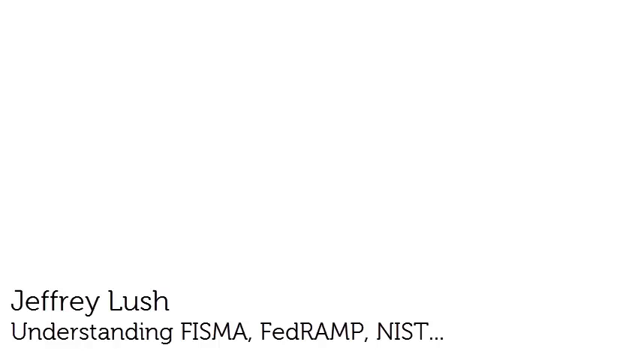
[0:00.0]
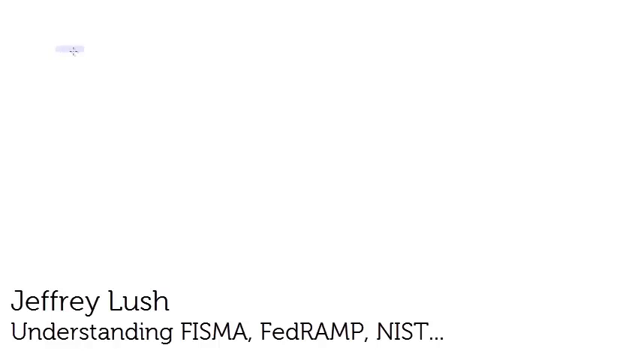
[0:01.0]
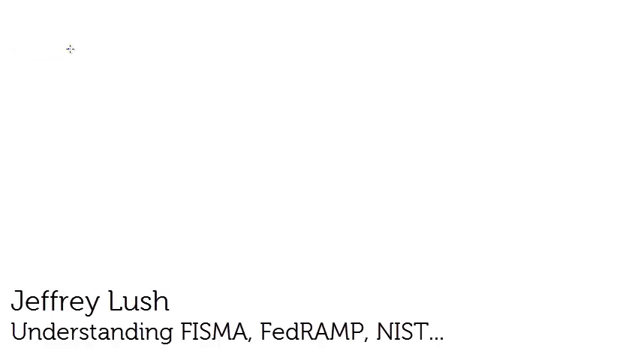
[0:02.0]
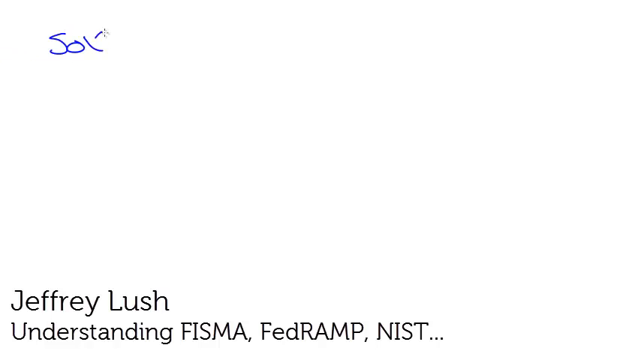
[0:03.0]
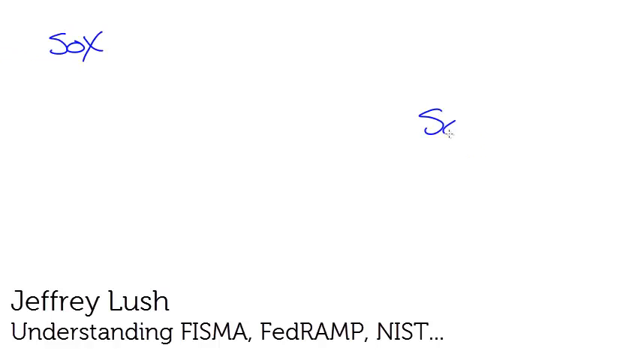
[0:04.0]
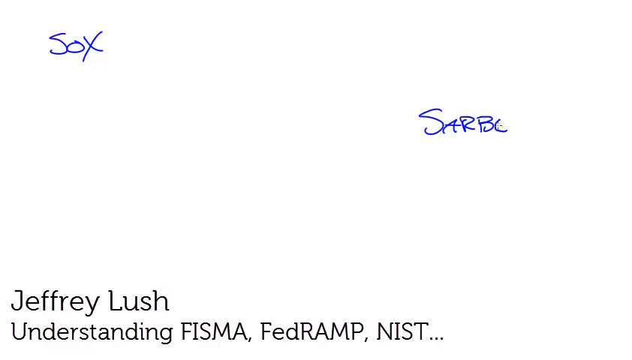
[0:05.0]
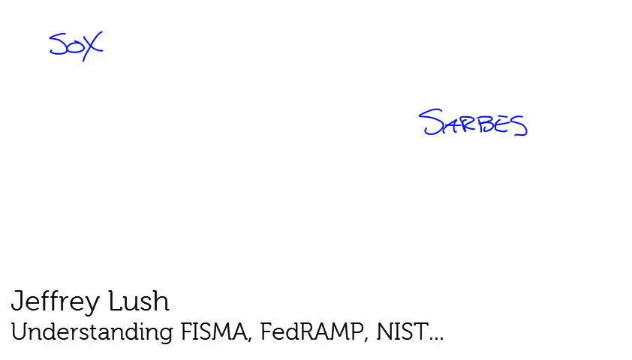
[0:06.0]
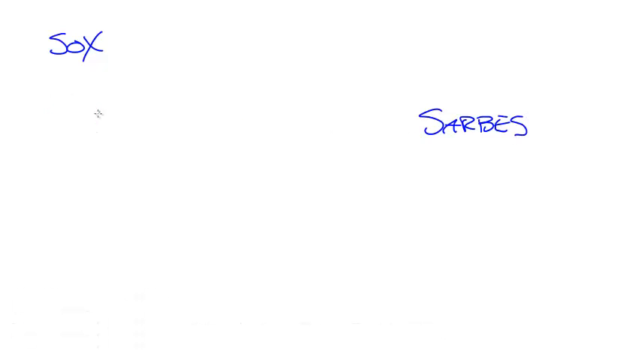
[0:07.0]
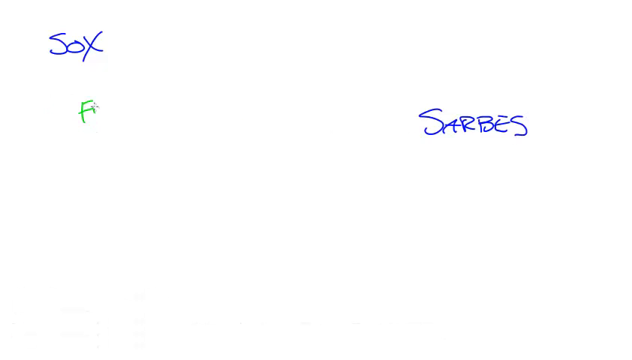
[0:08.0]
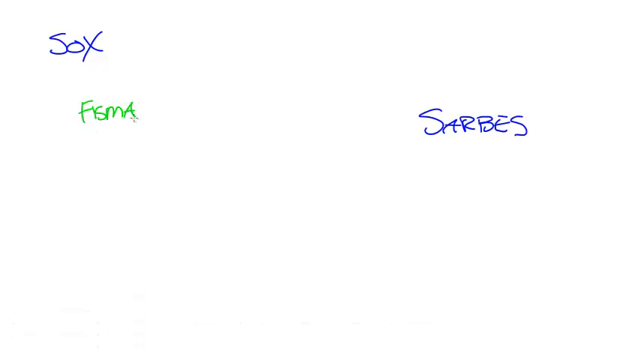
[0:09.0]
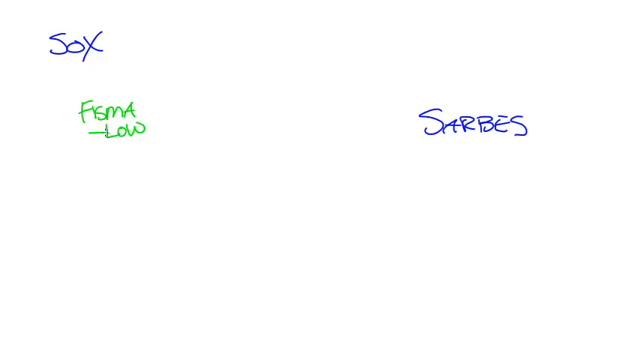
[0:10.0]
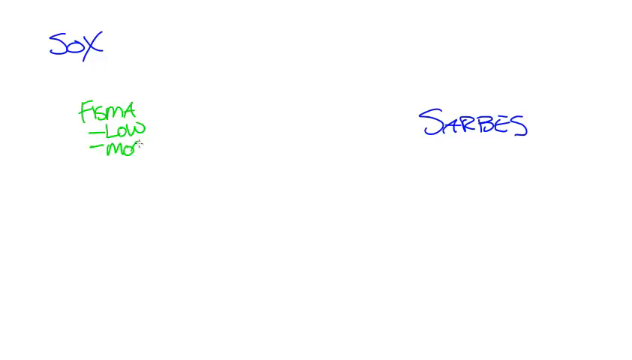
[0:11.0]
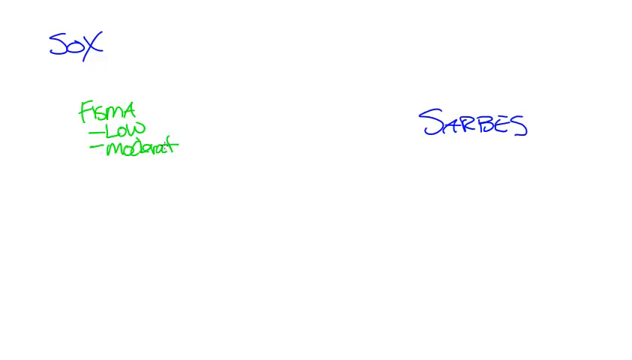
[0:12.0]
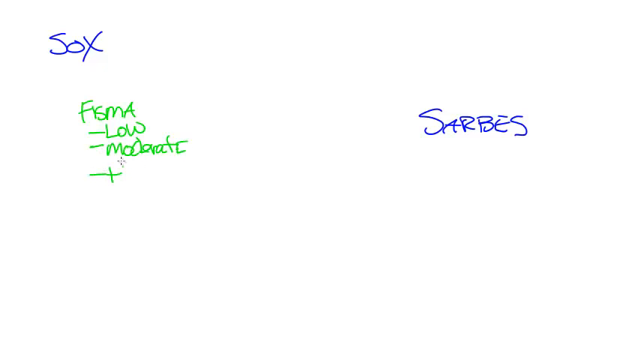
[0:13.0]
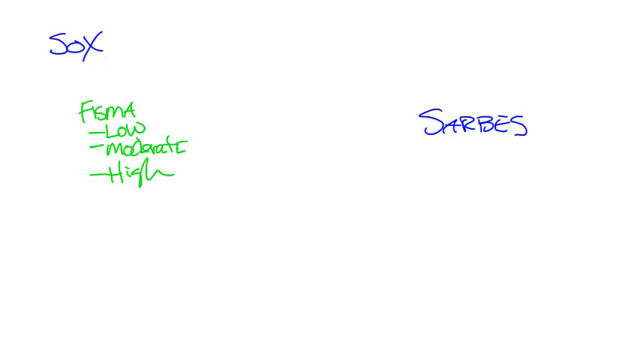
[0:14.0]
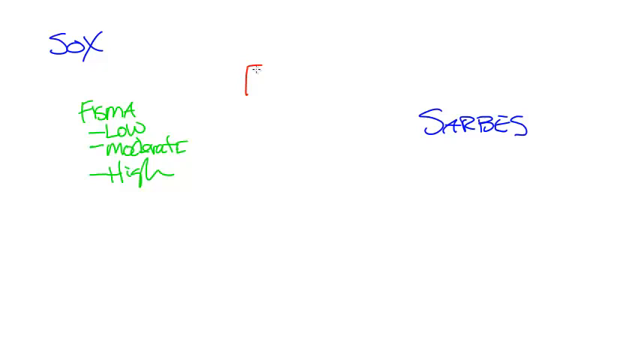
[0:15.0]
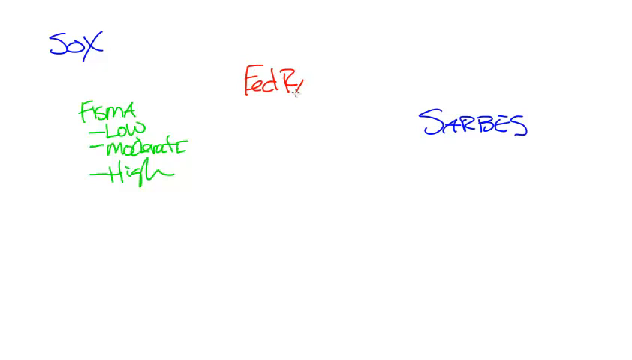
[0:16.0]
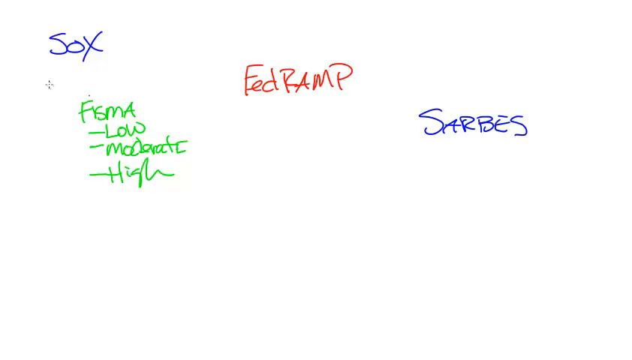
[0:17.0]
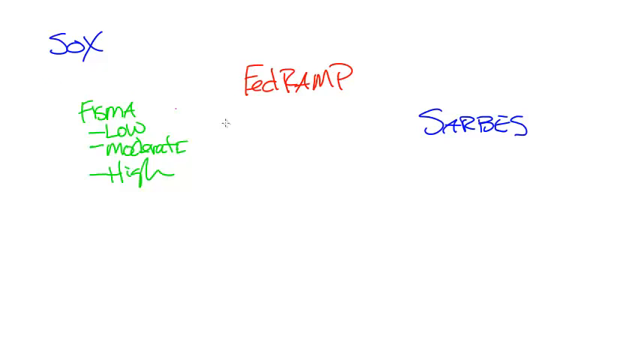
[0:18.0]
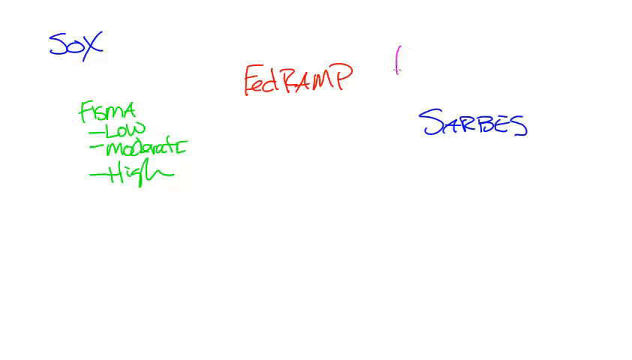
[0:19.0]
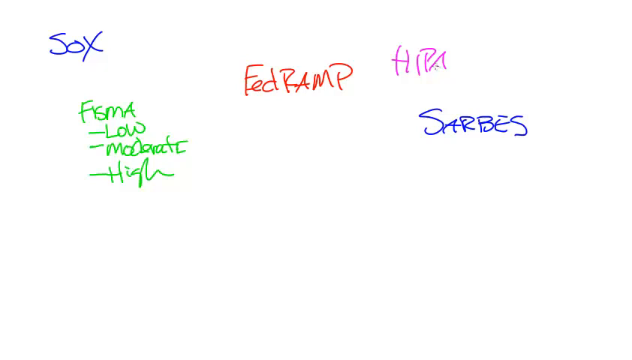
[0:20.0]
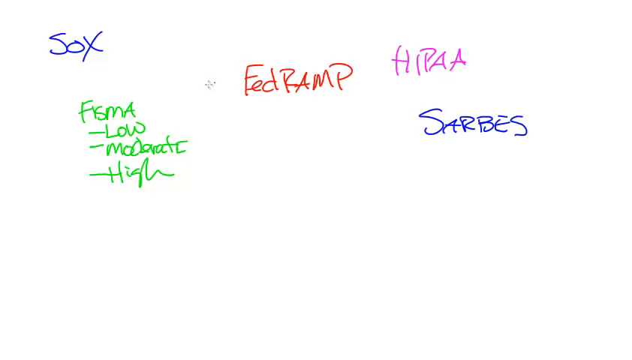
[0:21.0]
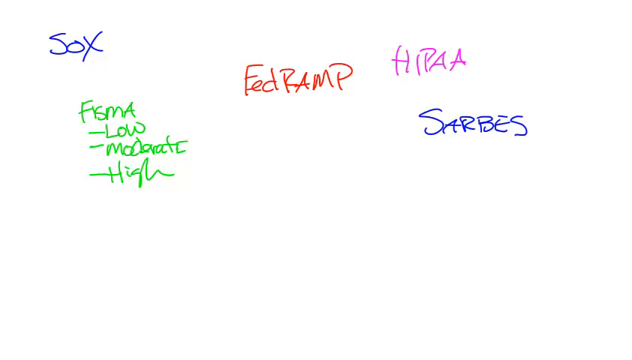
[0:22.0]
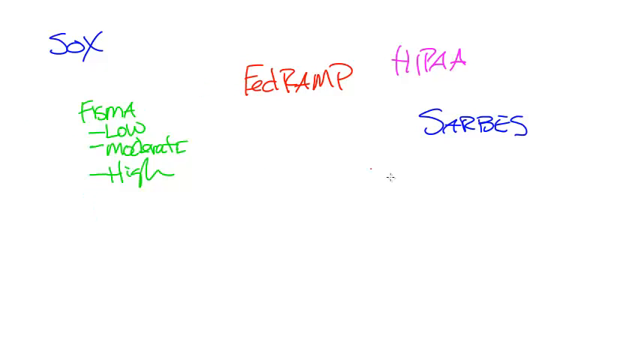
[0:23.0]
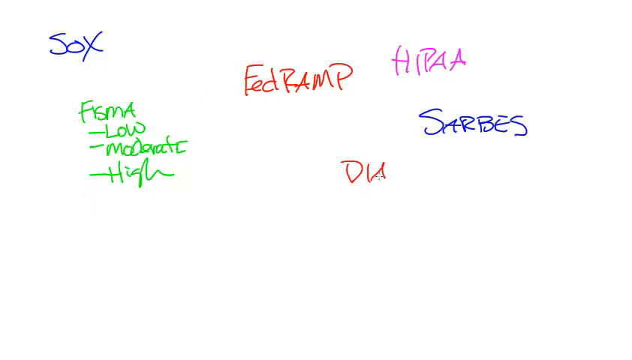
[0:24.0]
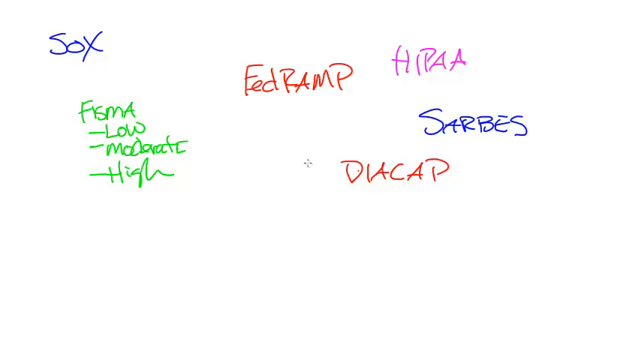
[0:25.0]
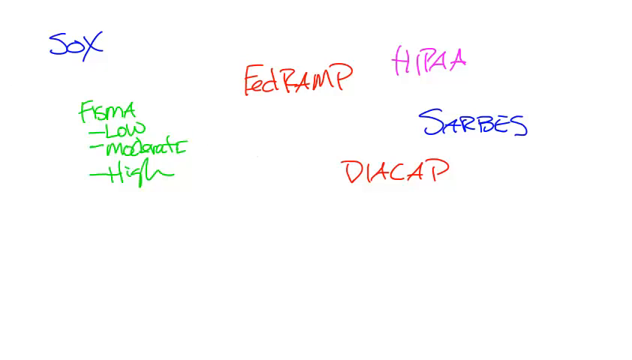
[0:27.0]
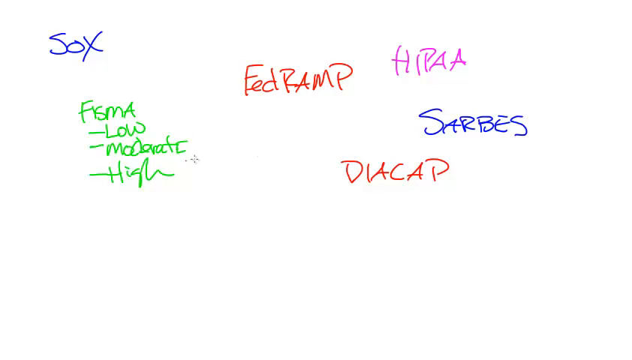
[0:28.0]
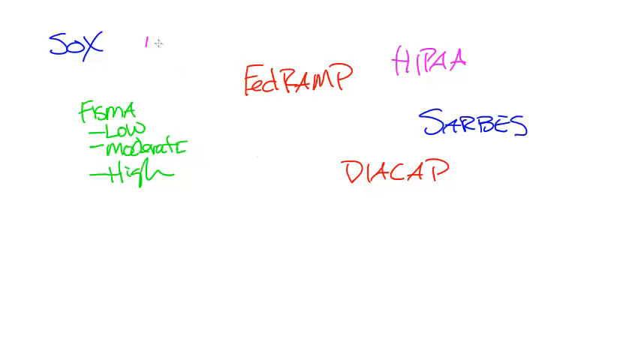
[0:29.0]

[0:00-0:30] The video opens on a white screen. In the bottom left corner, black text reads "Jeffrey Lush" and, below that, "Understanding FISMA, FedRAMP, NIST...". A cross-shaped pointer appears and moves to the upper right, where it writes "Sox" in blue in a handwriting style. It then moves to the middle right and writes "SARBES" in blue. Next it moves to the upper middle of the screen and writes "FedRAMP". Under "Sox" it writes "FISMA" in green, and beneath that, also in green, "- low", then "- moderate", then "- high". The pointer moves to the upper center of the screen and writes "fed ramp" in red, and just to the right of that writes "HIPAA" in purple. In the middle of the screen, slightly to the right, it writes "DIACAP" in red. It then begins writing something in purple to the right of "SOX".